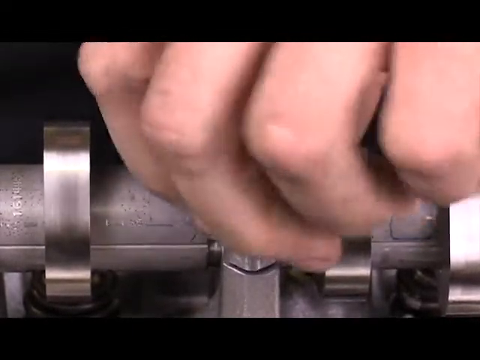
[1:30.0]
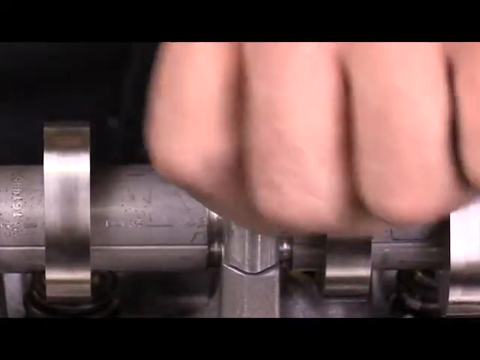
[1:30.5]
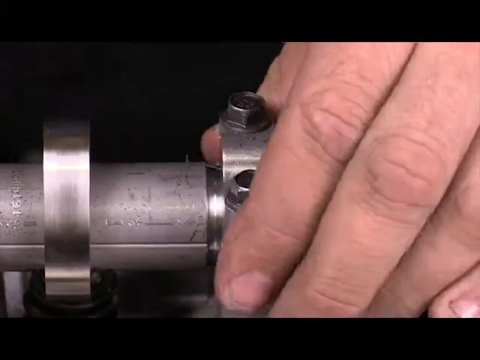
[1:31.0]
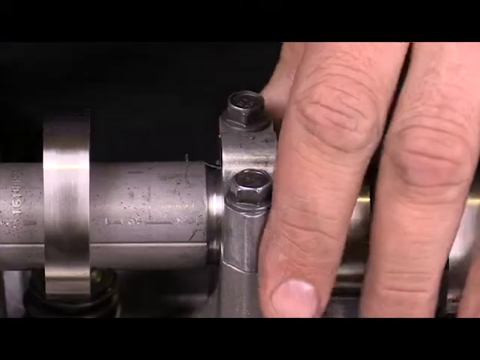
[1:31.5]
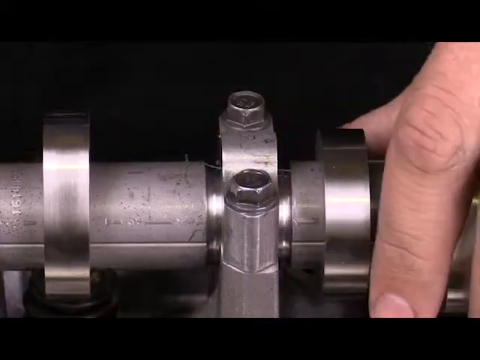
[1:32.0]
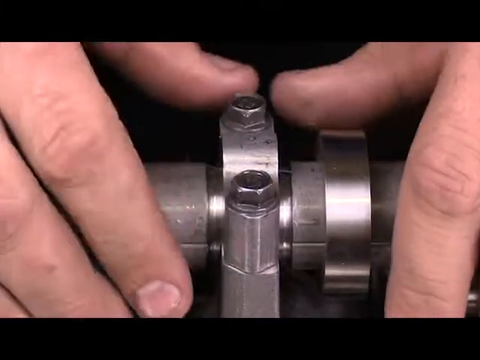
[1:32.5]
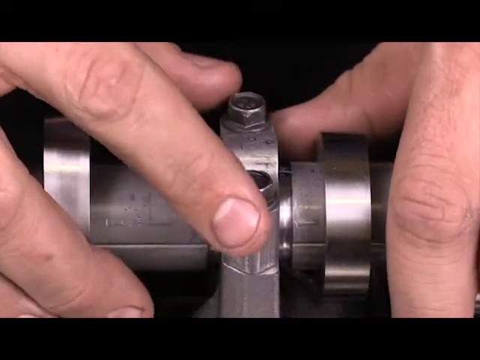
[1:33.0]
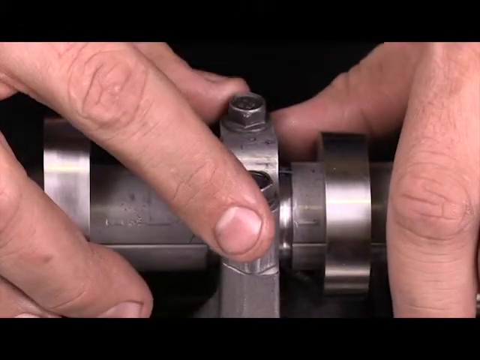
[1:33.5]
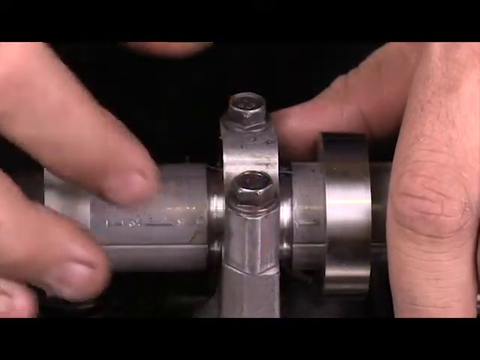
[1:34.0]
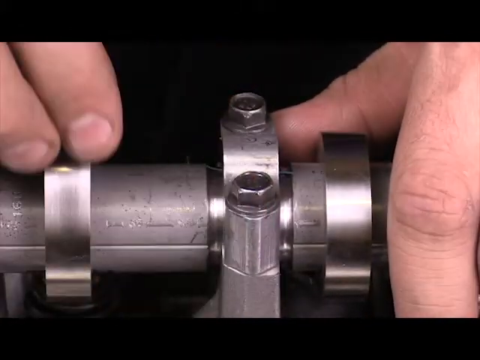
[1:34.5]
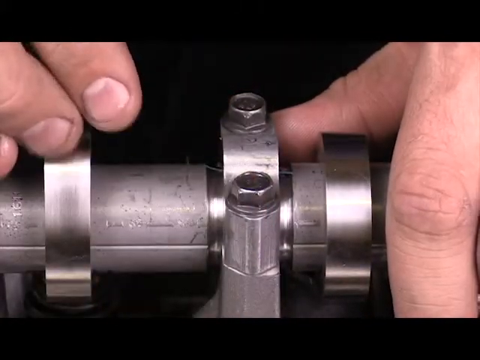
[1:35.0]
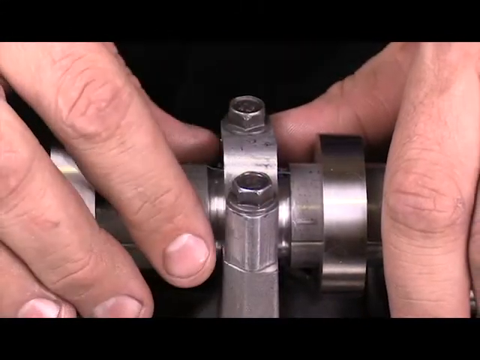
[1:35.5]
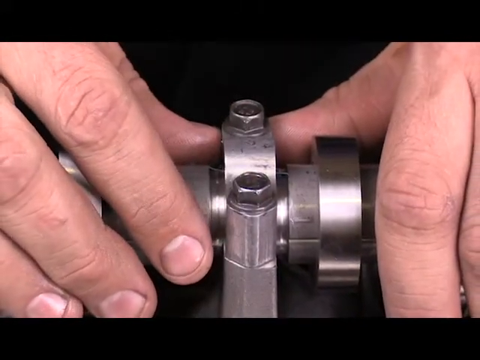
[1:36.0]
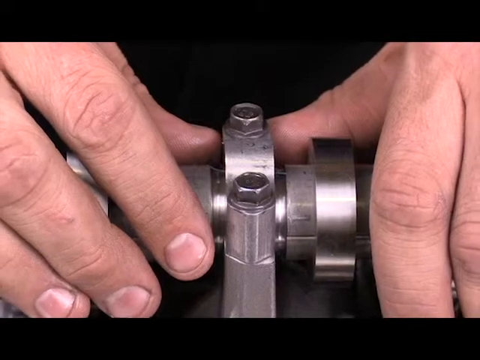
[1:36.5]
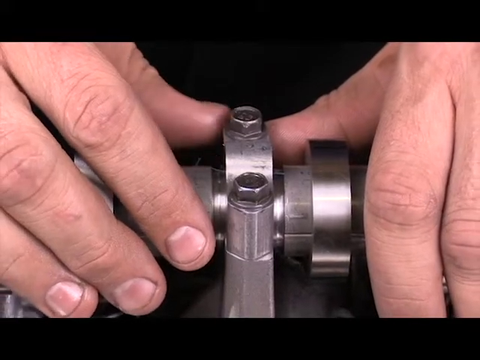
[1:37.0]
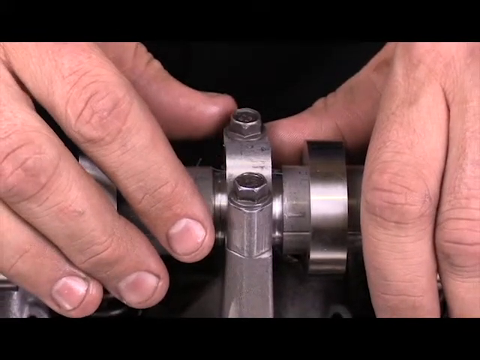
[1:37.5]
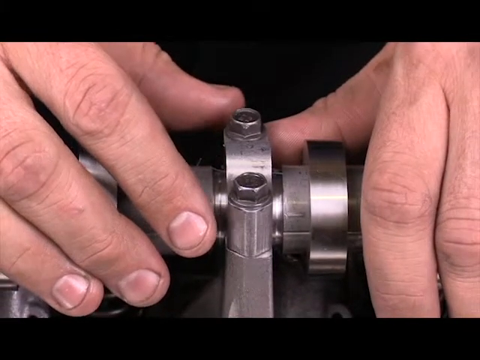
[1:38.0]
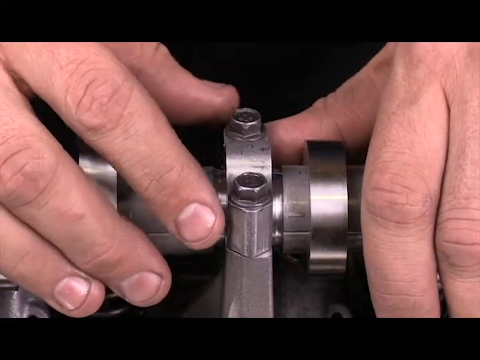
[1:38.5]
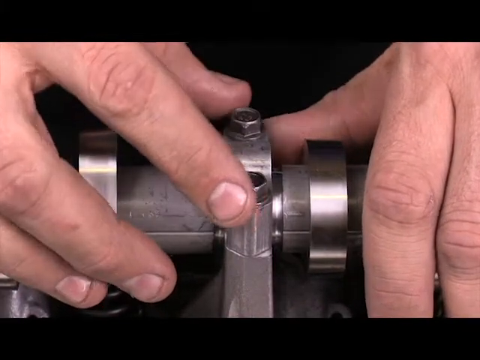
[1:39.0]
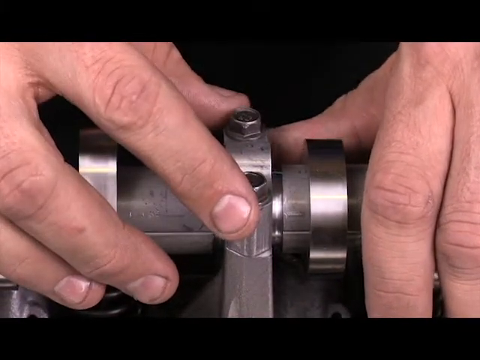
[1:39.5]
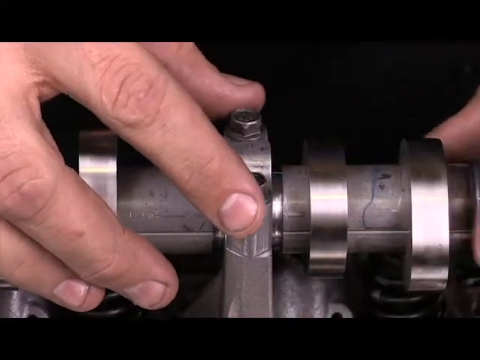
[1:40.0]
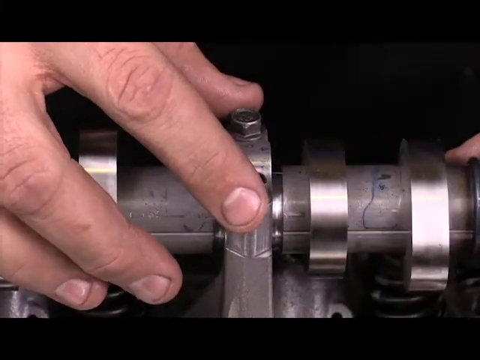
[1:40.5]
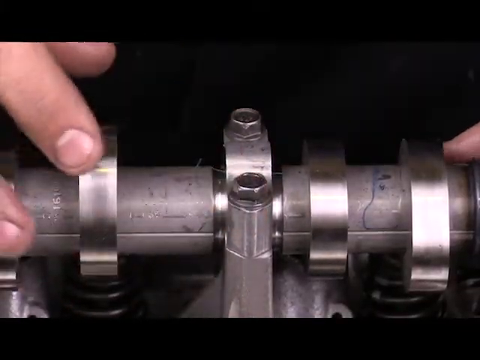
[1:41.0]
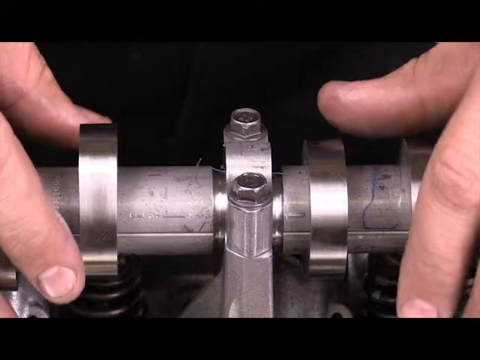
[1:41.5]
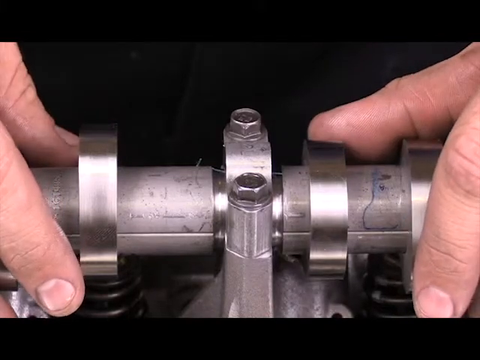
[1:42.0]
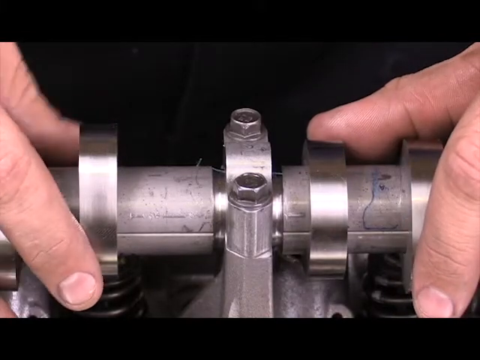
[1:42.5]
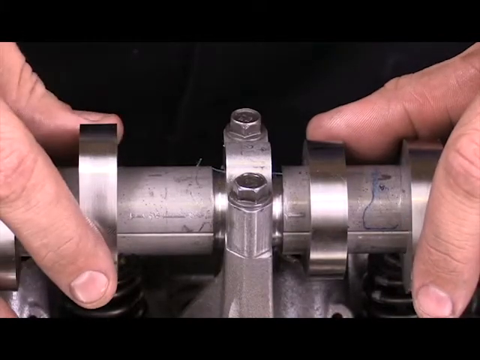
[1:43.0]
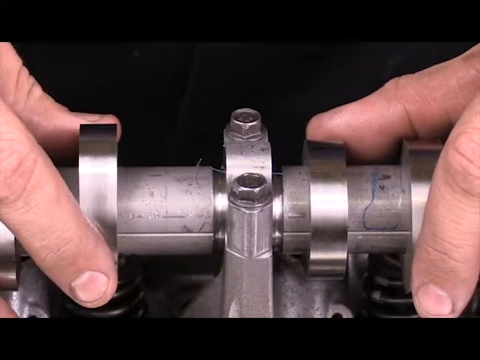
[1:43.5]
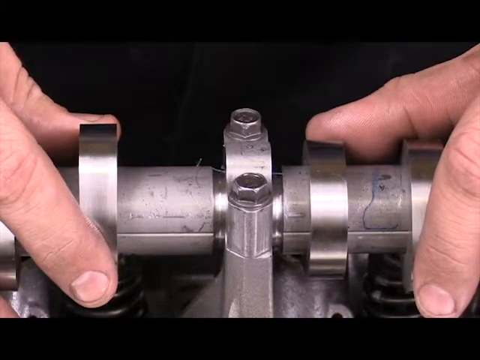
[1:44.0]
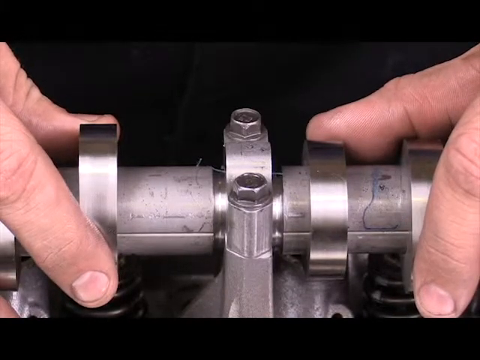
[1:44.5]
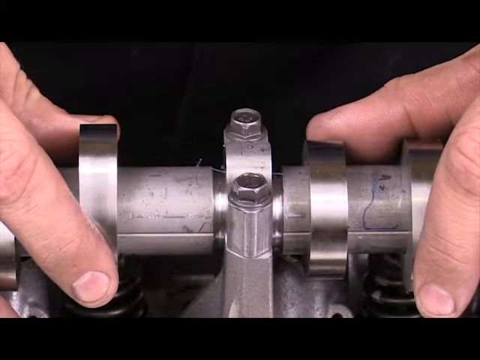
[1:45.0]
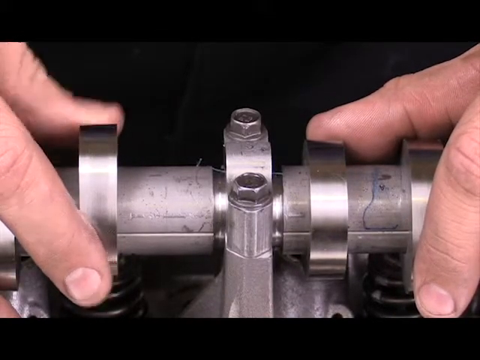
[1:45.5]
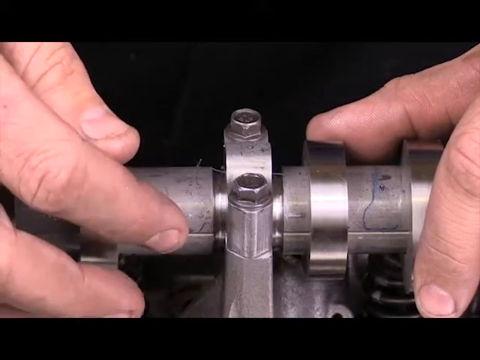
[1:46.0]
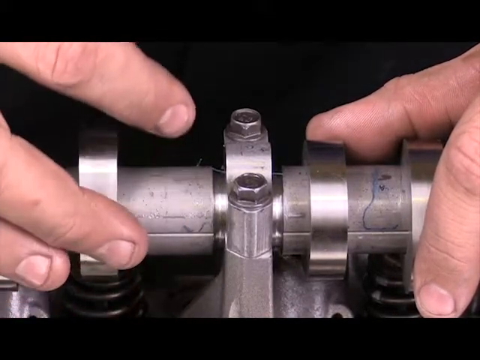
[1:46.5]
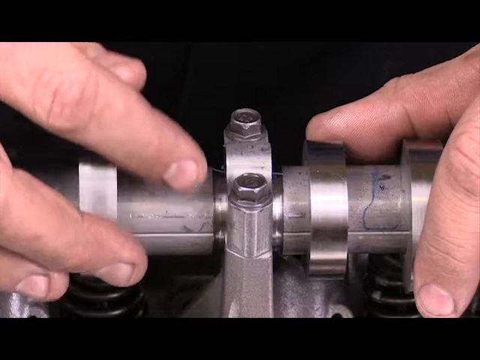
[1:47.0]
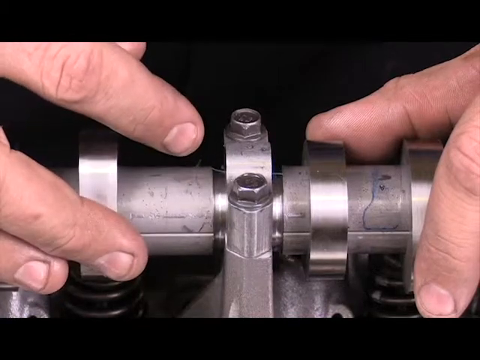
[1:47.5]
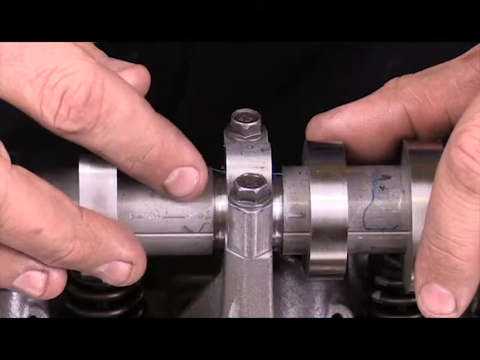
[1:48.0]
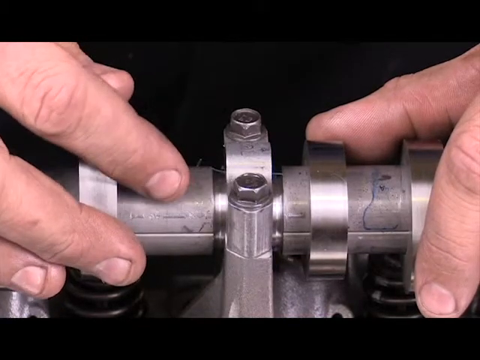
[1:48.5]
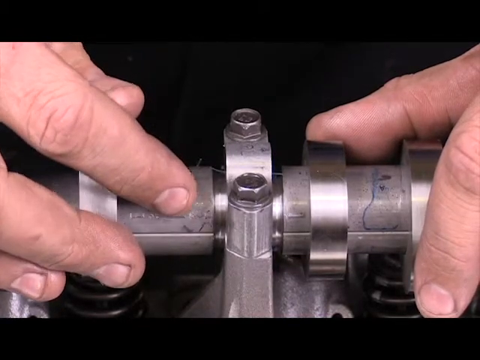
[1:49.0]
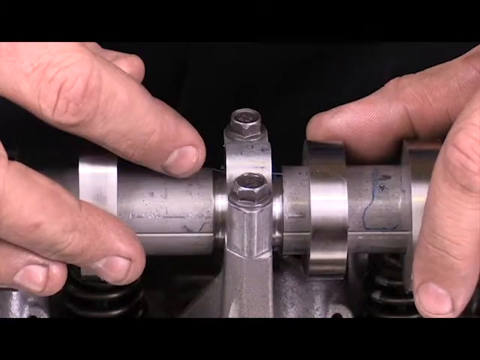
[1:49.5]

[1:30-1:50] The shot is very zoomed in on a silver, cylinder-shaped piece of metal that looks like it has some chrome pieces on it. Right in front of the camera is a white male hand, whose fingers appear to be turning as though turning some kind of screw. The hand then kind of goes over and rests next to the object he just screwed in. His other hand comes into the image, grasps the piece of metal he just screwed, then comes off of it. Both hands then lightly grip the cylinder, and he seems to be using his thumbs on the little piece he just screwed on. He pulls off his left hand and then pulls back his right hand, revealing a little more space on the cylinder, and then uses his right index finger to start pointing at some kind of part on the cylinder.